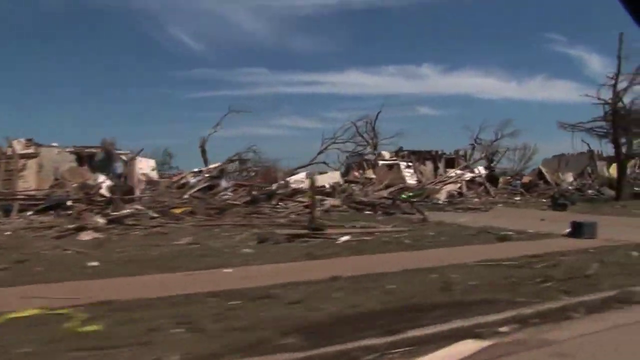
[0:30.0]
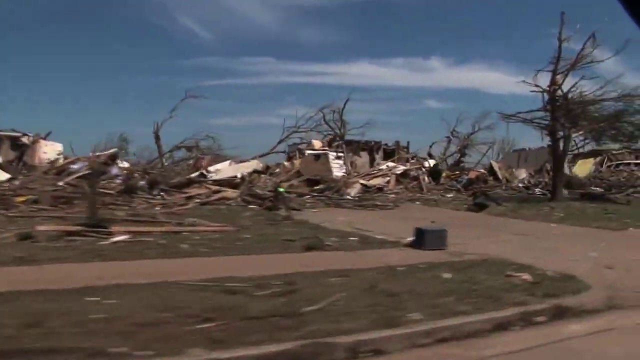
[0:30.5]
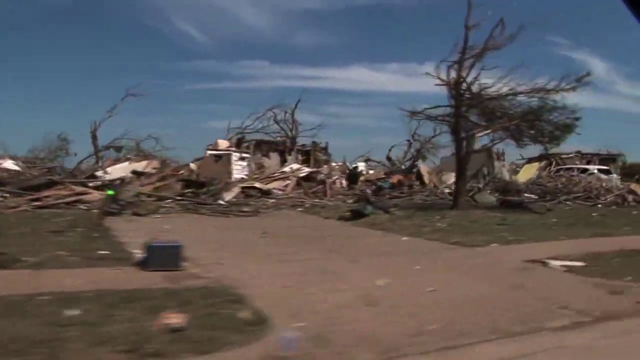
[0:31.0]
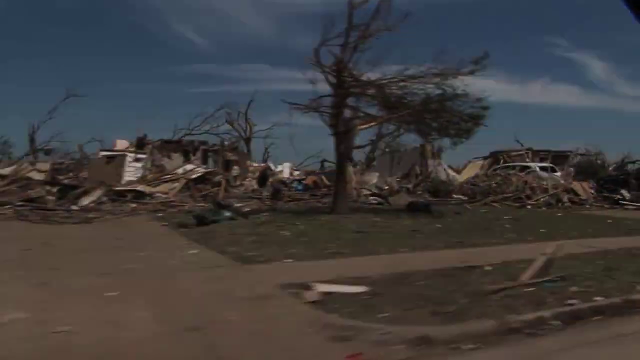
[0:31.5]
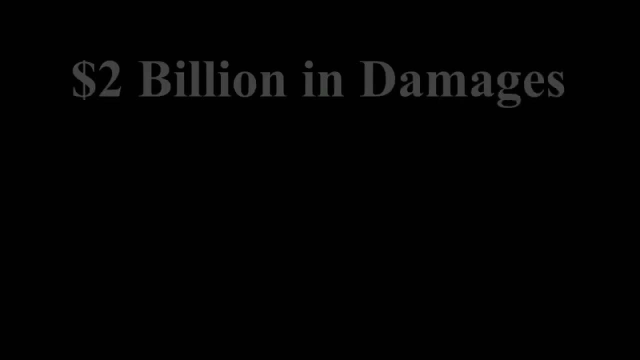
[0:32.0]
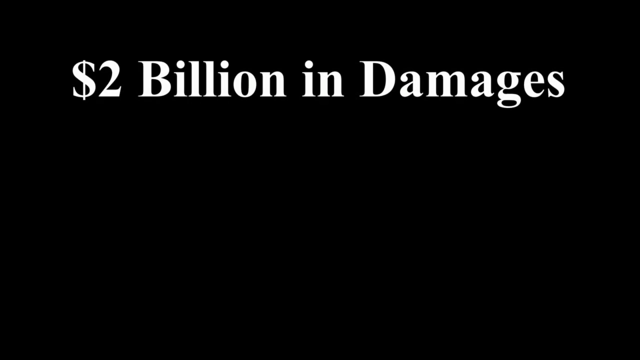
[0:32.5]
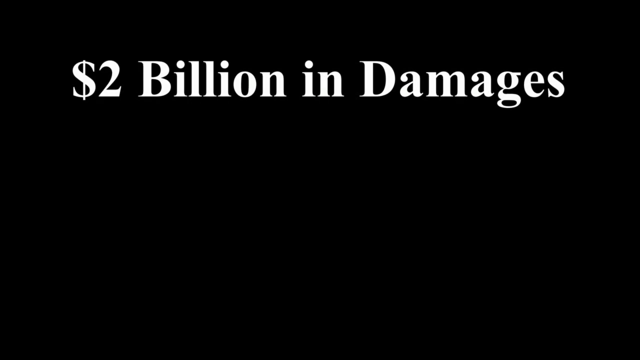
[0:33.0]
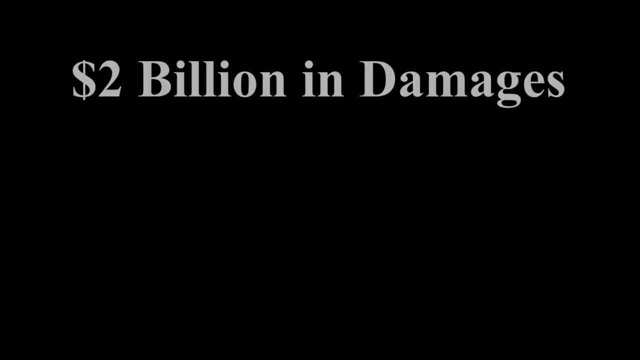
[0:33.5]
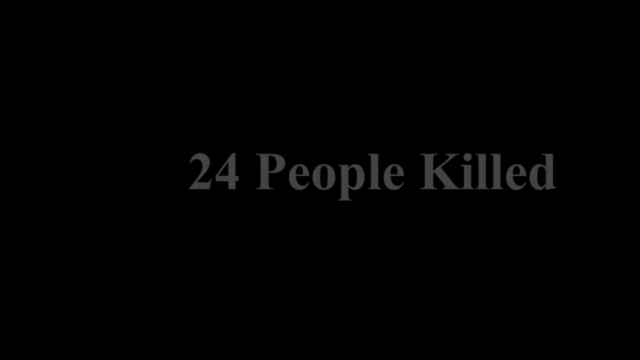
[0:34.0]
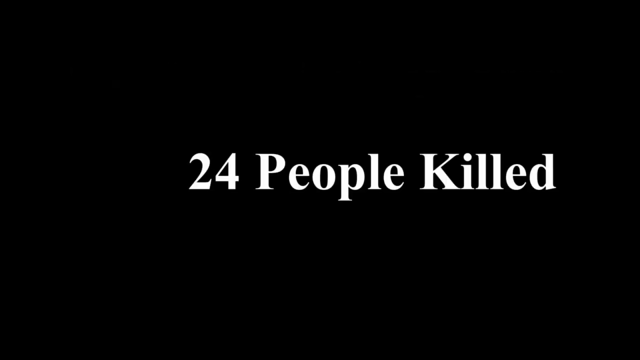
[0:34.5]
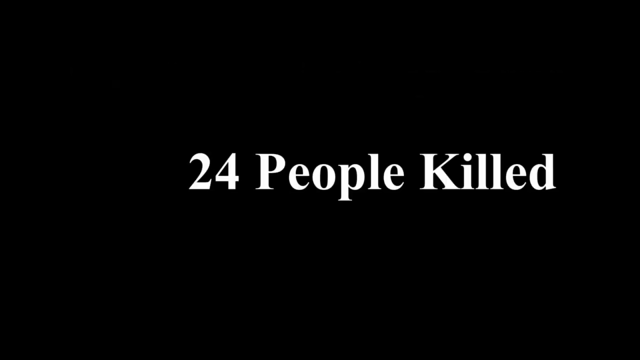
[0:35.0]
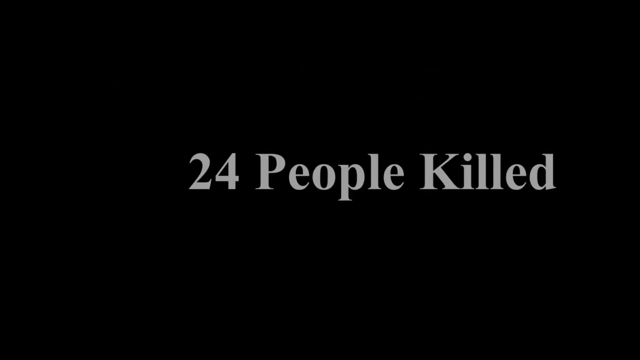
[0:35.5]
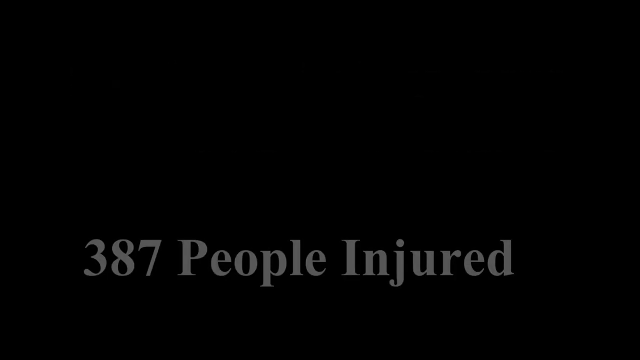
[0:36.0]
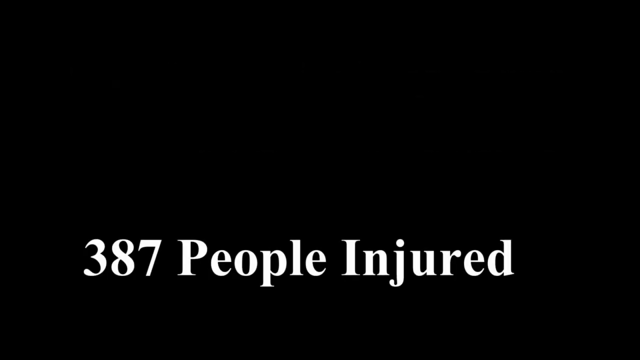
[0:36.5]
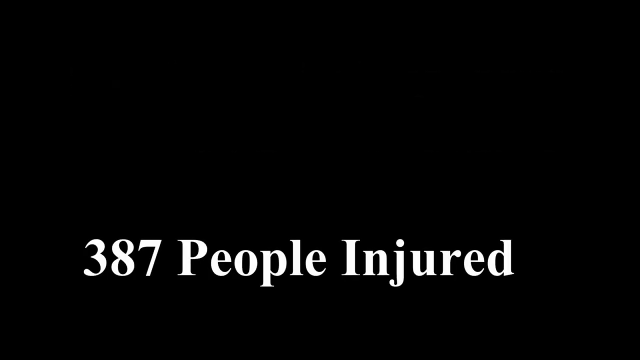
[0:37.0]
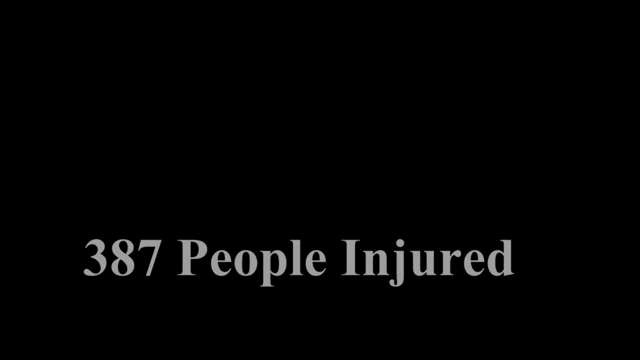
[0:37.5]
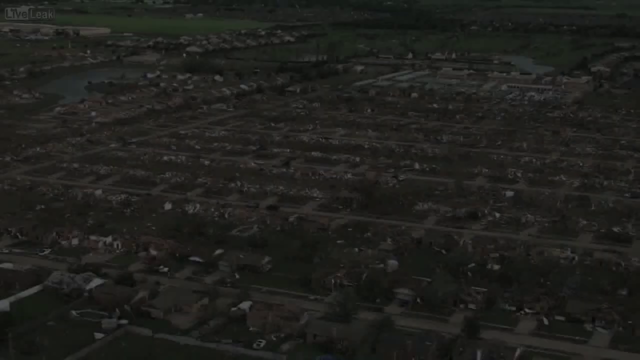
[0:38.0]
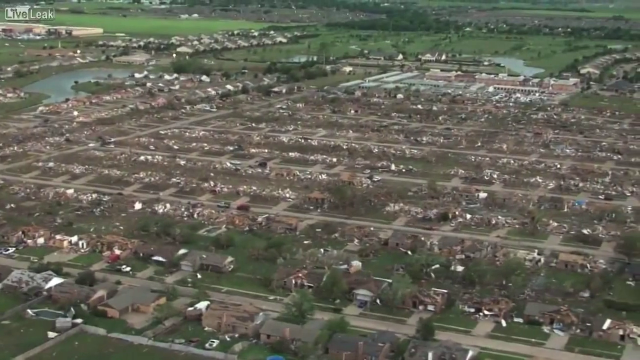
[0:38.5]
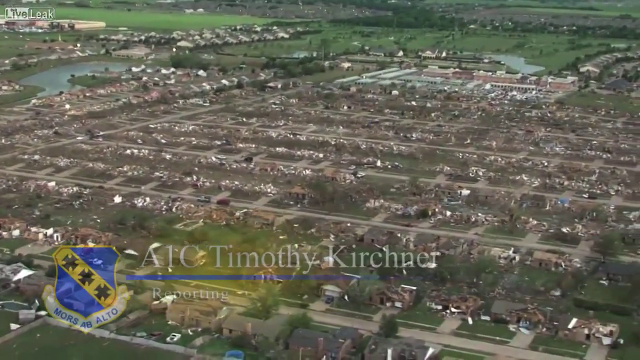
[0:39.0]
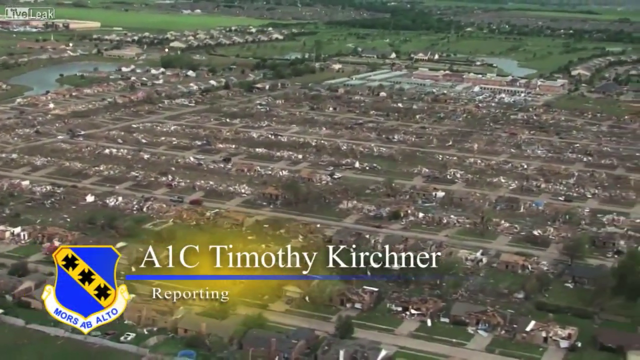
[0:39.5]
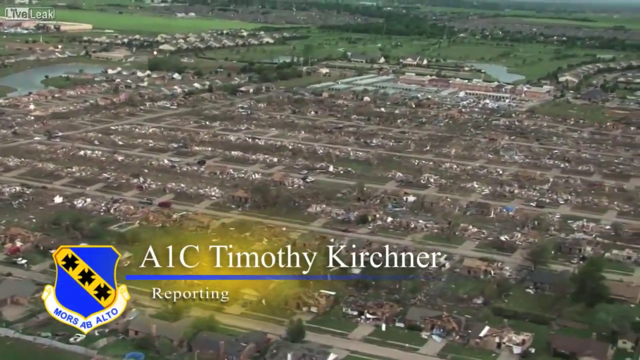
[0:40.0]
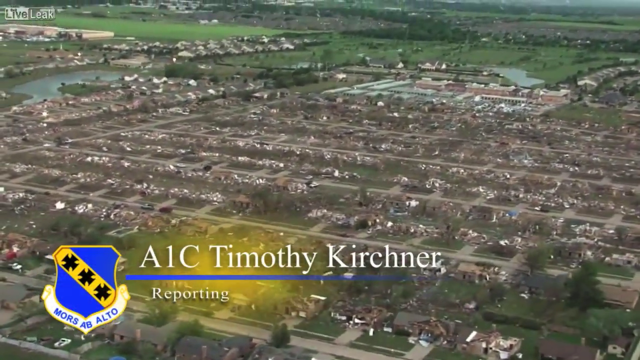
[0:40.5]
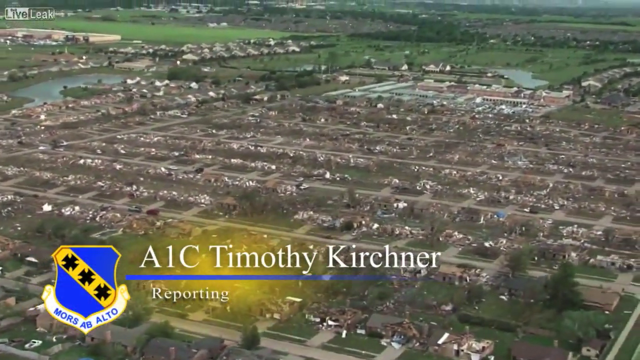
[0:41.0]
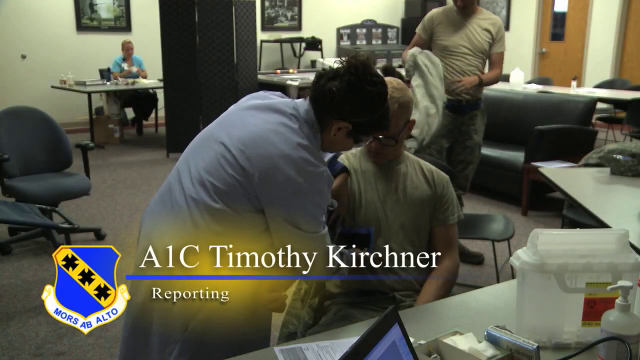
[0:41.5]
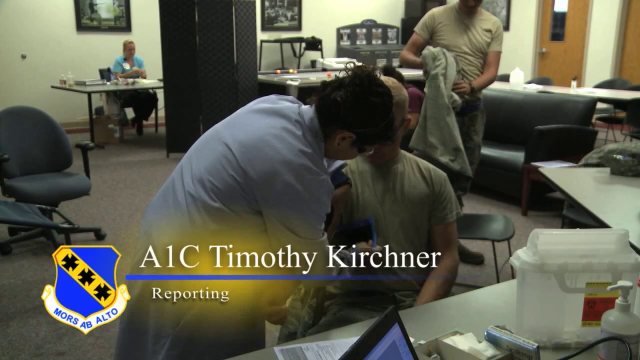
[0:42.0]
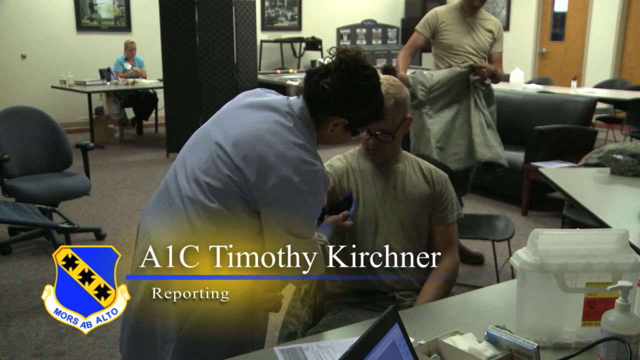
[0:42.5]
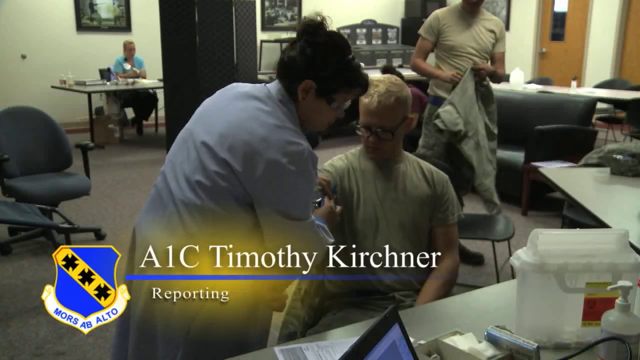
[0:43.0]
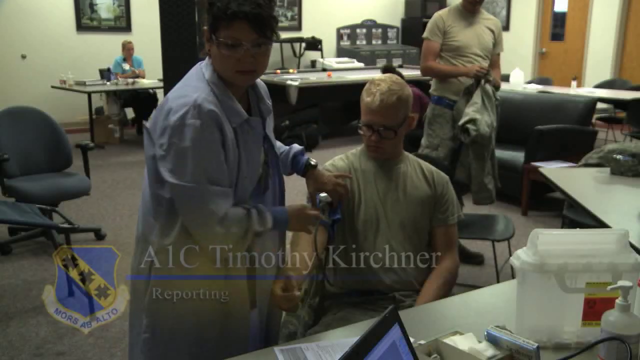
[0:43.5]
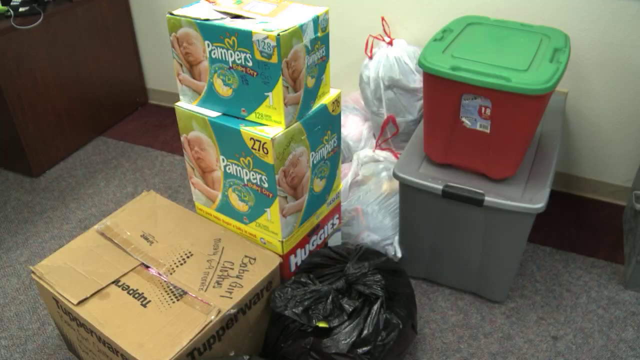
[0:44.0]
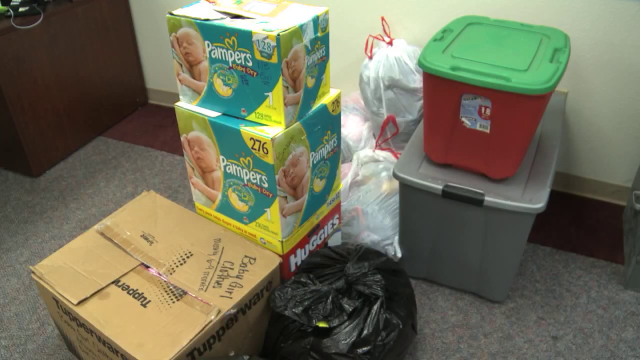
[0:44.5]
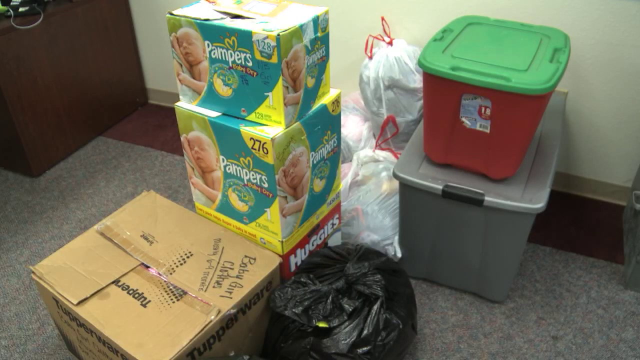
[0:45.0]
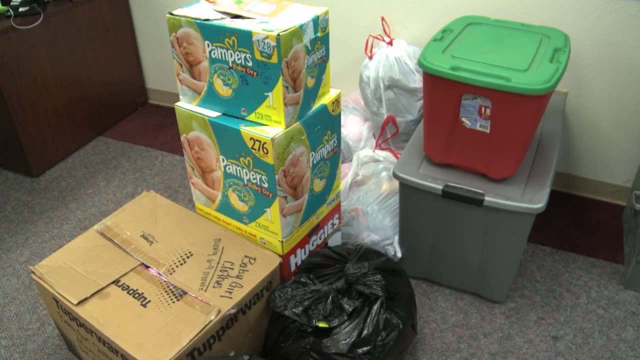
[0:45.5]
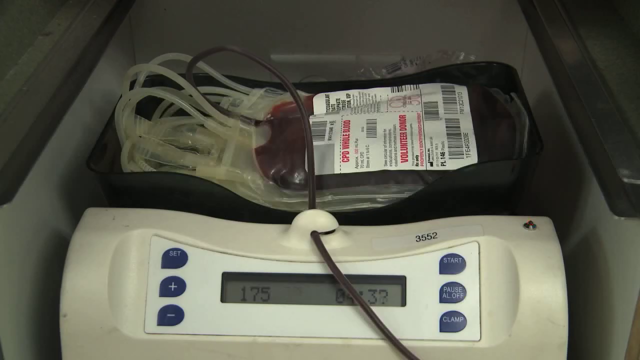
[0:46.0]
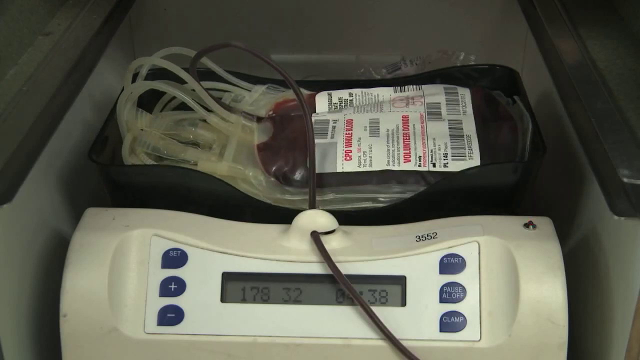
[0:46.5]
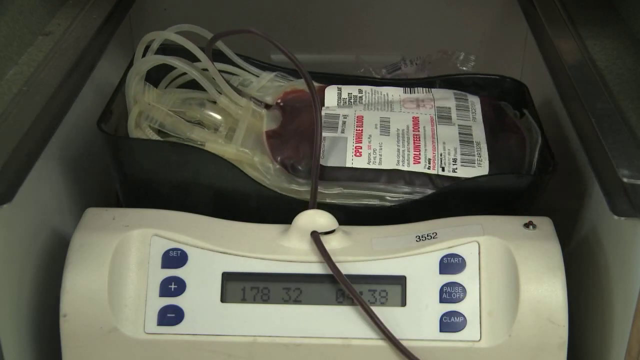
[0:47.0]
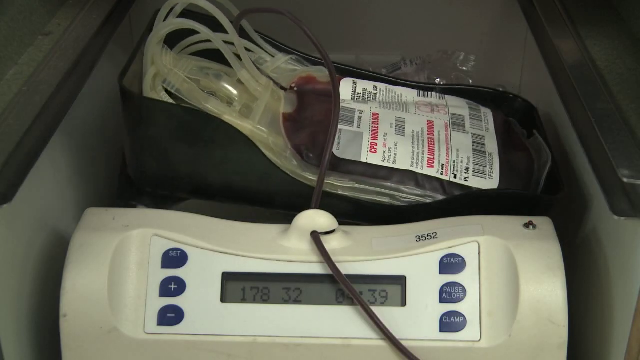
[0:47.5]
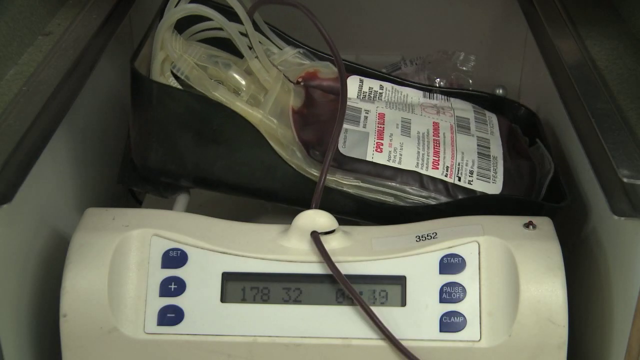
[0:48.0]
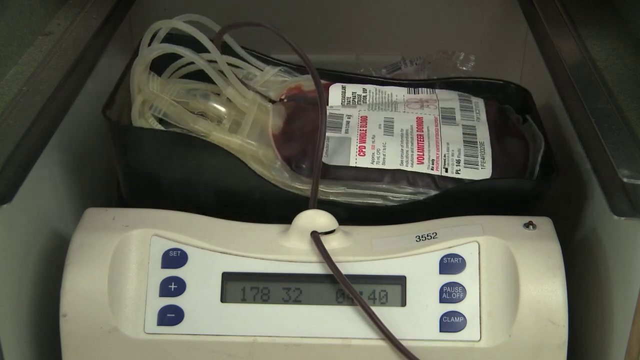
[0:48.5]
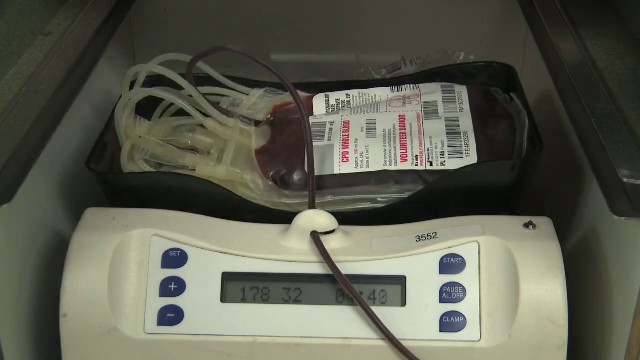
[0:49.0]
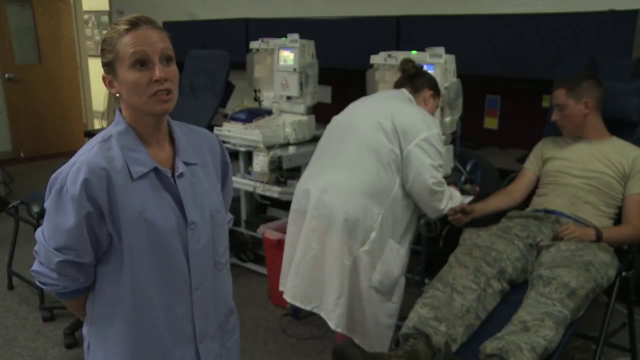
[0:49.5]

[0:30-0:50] Damaged properties and trees with no leaves, also wrecked, are shown. A black screen follows with white writing that reads "two billion dollars in damages. 24 people killed, 387 people injured." Another report comes from A1C Timothy Cochner. In a room that looks like a hospital, a lady in a blue top sits on a chair in front of a desk, and closest to the camera are two men wearing light grey tops. A nurse with black hair and a large blue coat assists a man sitting on a chair who wears spectacles with a dark frame, checking his BP. Donations are then shown: a box on the floor with "Tupperware" written on it, a black bin bag next to it, and two storage boxes, one grey with black handles and one red with a black lid. There are three boxes of nappies; the bottom one is Huggies, with "Huggies" written in white on a red background, and there are Pampers boxes showing a sleeping baby, with "Pampers" written in white and the colours yellow, blue and black. More blood donations follow, with people donating in the back.